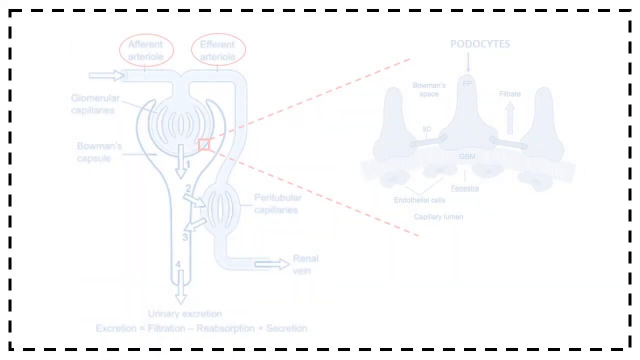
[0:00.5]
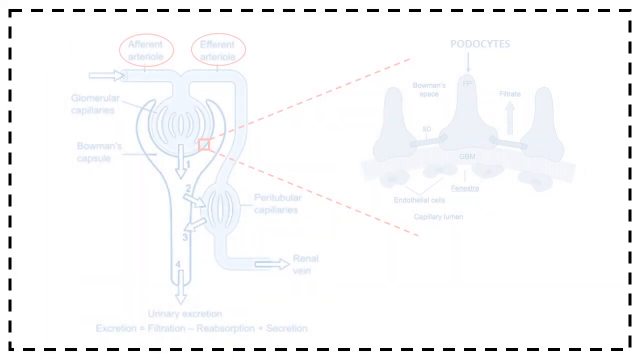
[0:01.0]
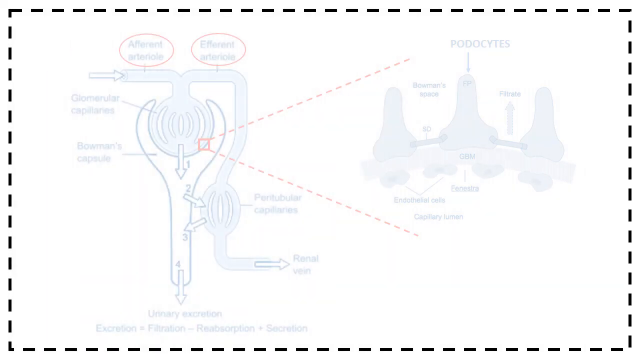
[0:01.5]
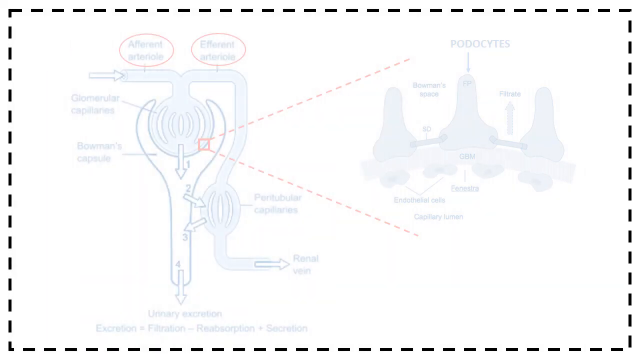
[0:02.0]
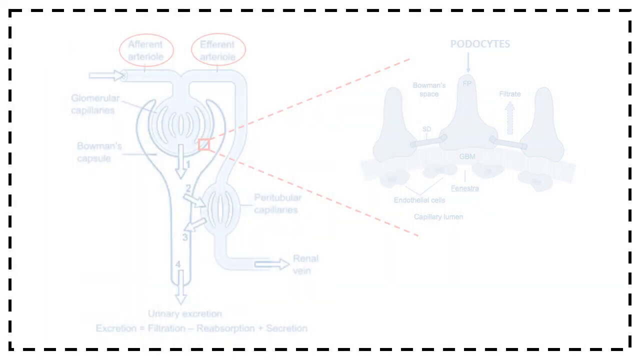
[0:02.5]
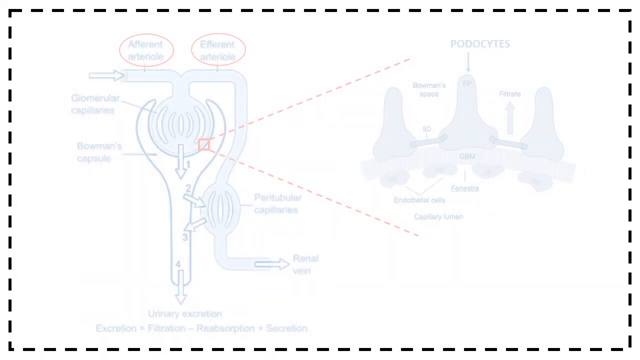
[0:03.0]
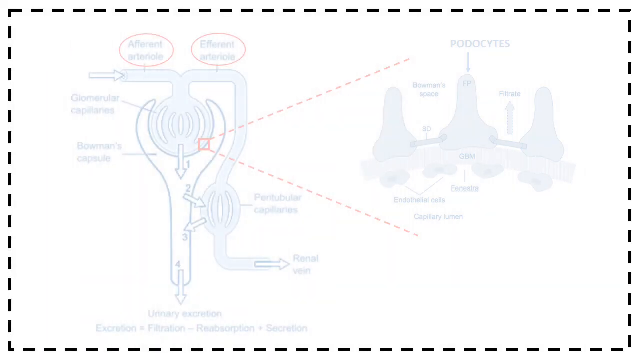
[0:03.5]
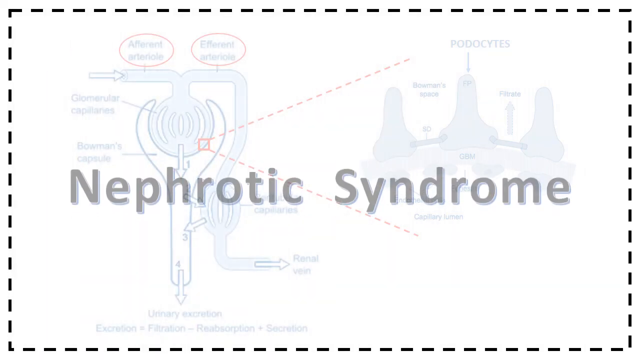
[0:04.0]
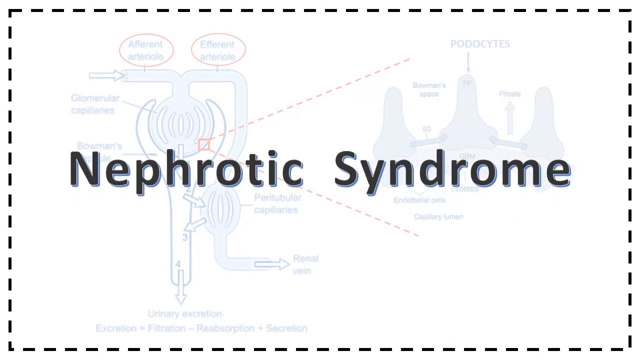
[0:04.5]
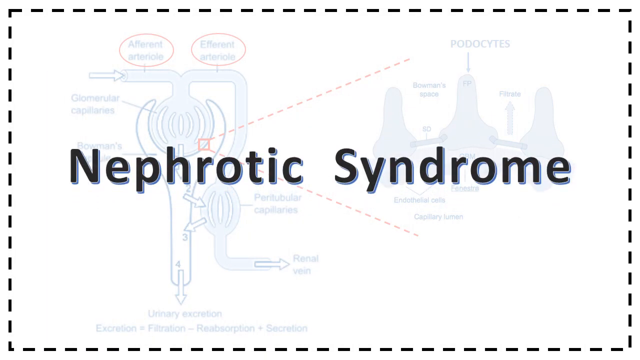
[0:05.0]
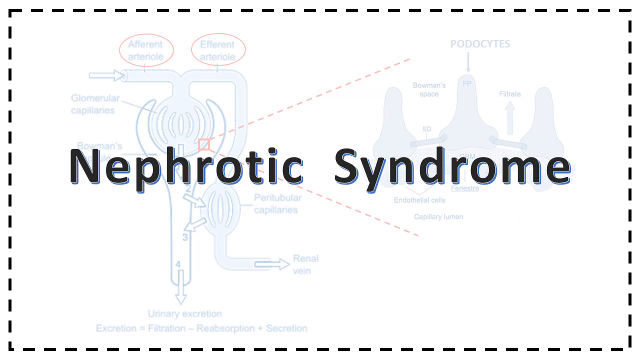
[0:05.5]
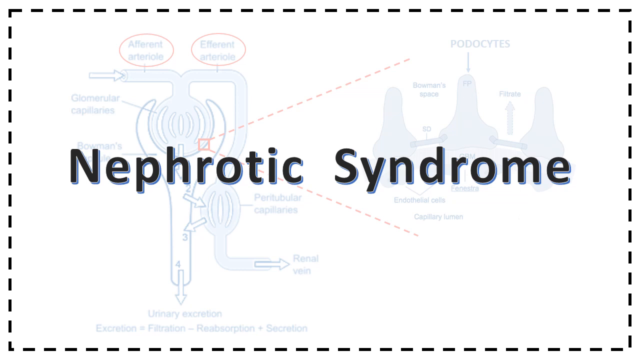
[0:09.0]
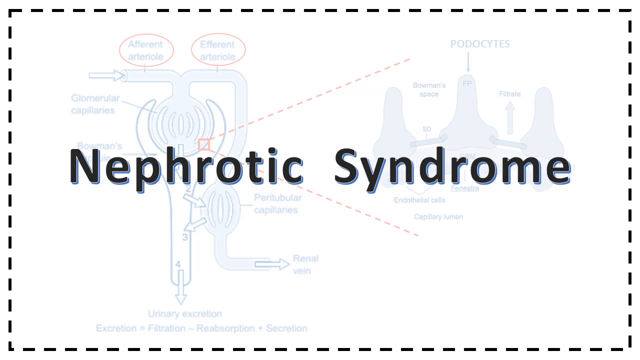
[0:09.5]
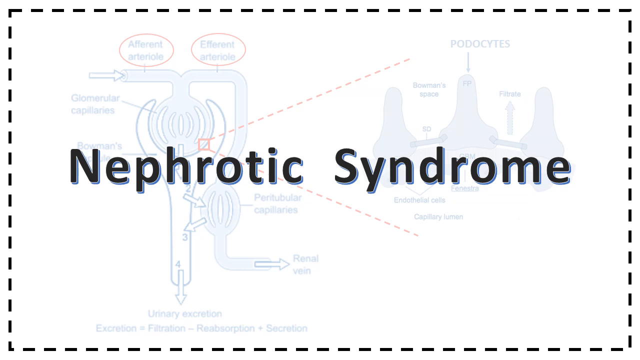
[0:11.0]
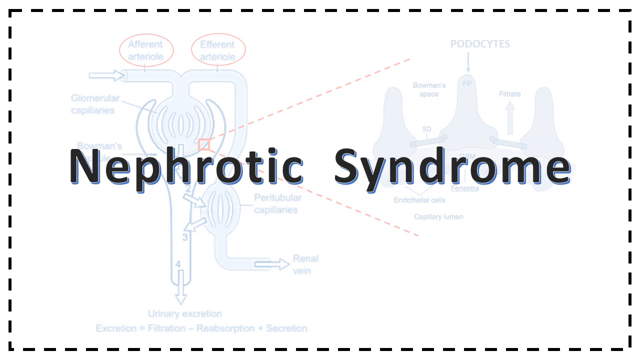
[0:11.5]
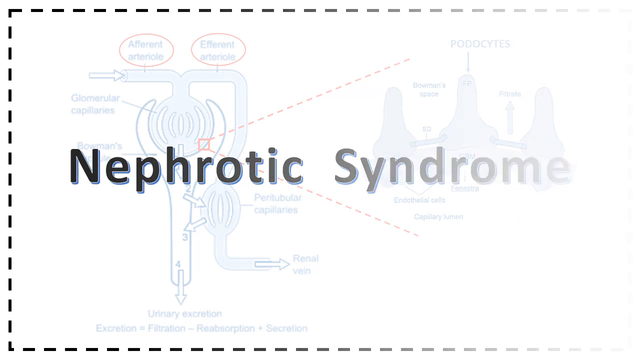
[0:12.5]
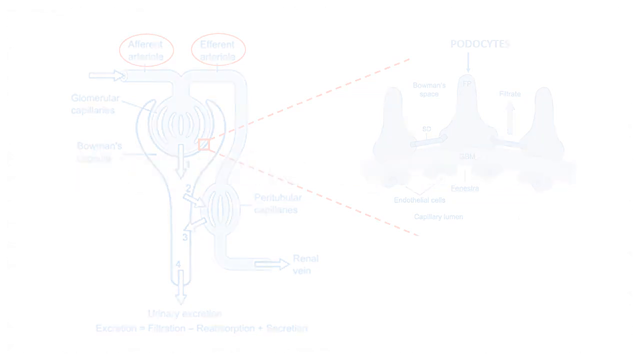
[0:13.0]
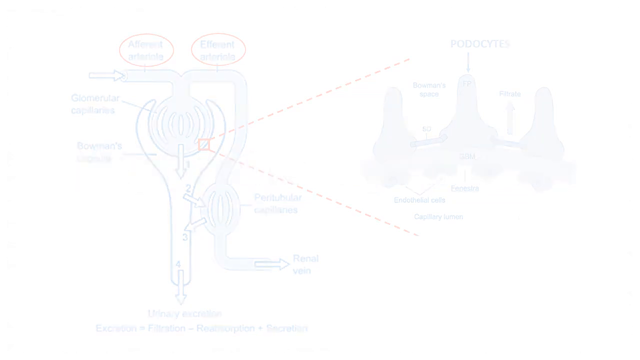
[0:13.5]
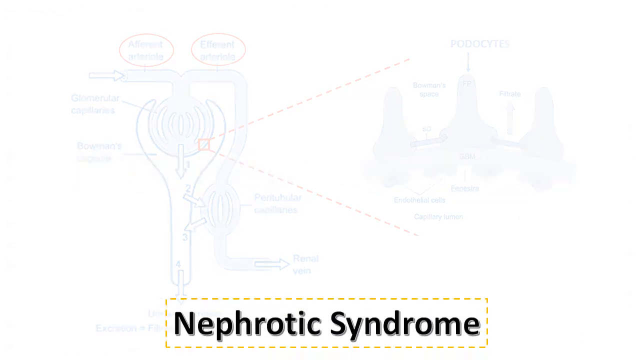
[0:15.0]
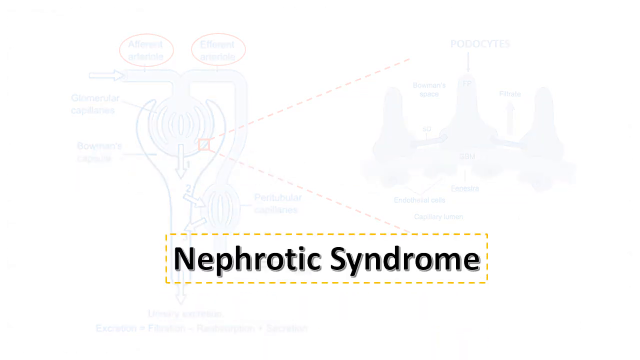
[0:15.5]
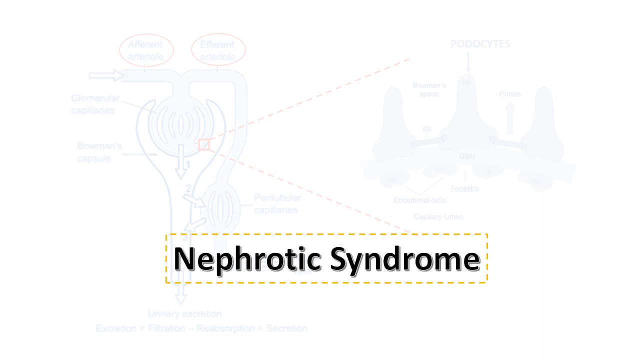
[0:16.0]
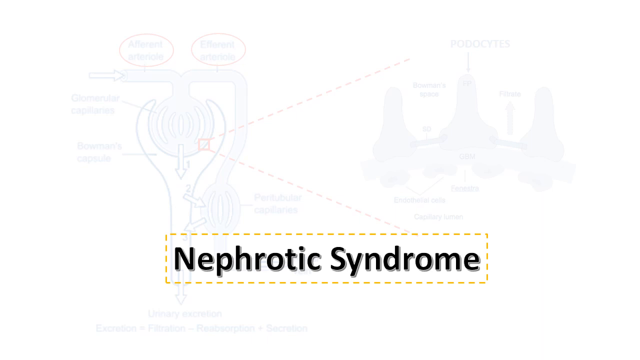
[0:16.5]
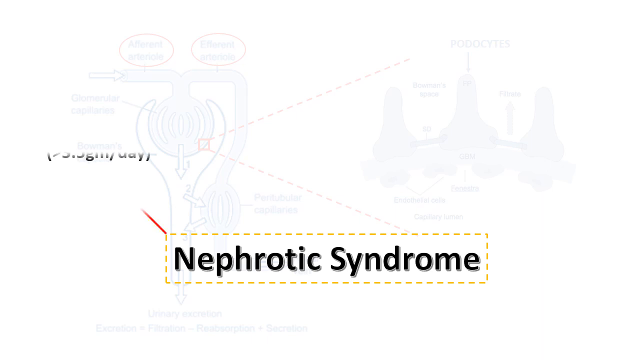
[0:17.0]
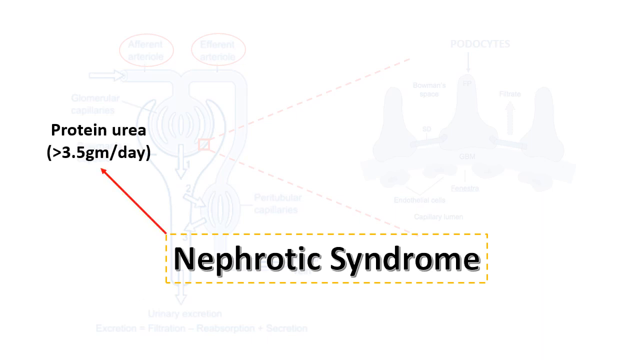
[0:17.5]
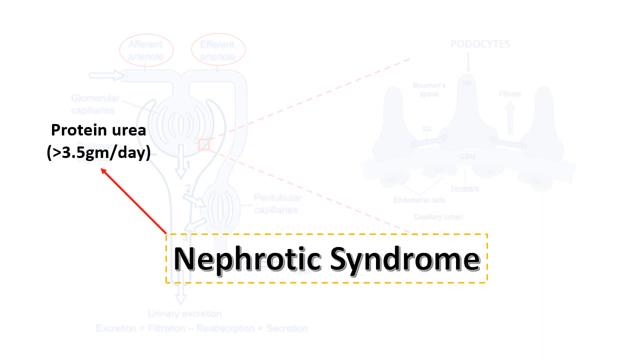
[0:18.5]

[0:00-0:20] A white screen bordered by a black dashed line shows a faded, bluish drawing: one diagram on the left and another on the right. The left diagram shows a part that comes up kind of like a flower, holding a ball inside its top. Two tubes come out of that ball, one going left and one going right; the right one turns vertically and goes down next to the part that would be the stem if it were a flower, forms another ball there, an oval, and then turns horizontal again. The bottom tube is labeled "renal vein", the oval ball "peritubular capillaries", the tube at the top "efferent arteriole" and the one on the left "afferent arteriole". The large first ball in the center is labeled "glomerular capillaries", and the main part holding that ball is labeled "Bowman's capsule". The right diagram has three masses connected at the bottom by a tube between each. Its labeling is hard to see, but the center mass is labeled "podocytes", the space between the first and second is labeled "Bowman's space", and below the middle one are the letters "GBM". Between the two diagrams, a small red square is at the bottom right of the circle labeled "glomerular capillaries", and two dotted red lines form a ray encompassing the diagram on the right. In front of this appears the title "nephrotic syndrome" in black with a gray shadow. The border and the title disappear, and black text rises from the bottom reading "nephrotic syndrome" again, now outlined with an orange dashed line. An arrow comes from the upper left corner of the orange dotted line and reads "proteinuria greater than 3.5 gm per day".